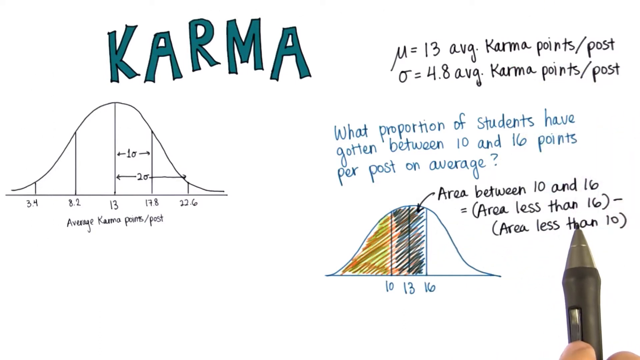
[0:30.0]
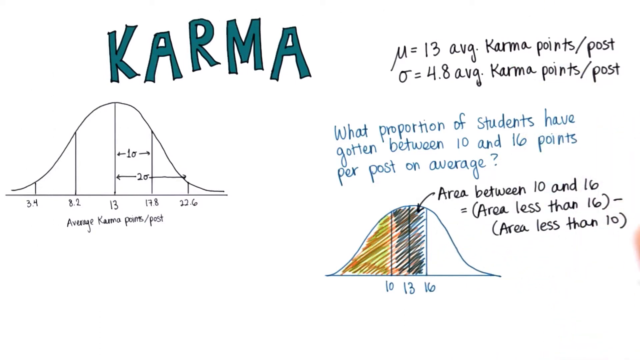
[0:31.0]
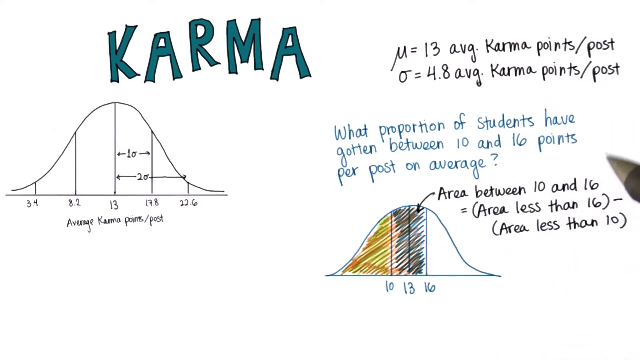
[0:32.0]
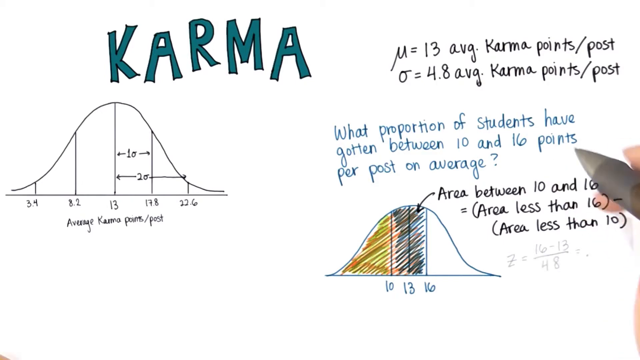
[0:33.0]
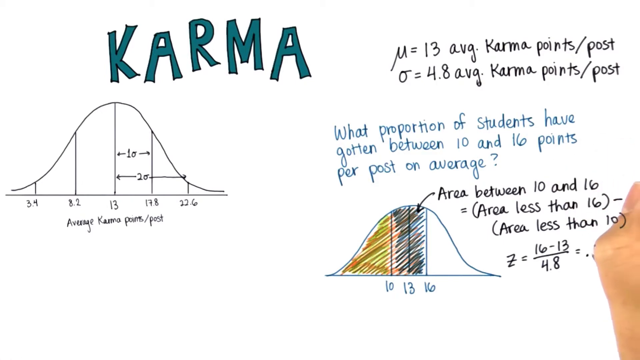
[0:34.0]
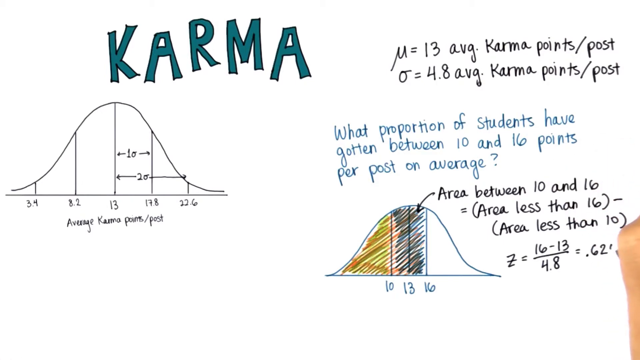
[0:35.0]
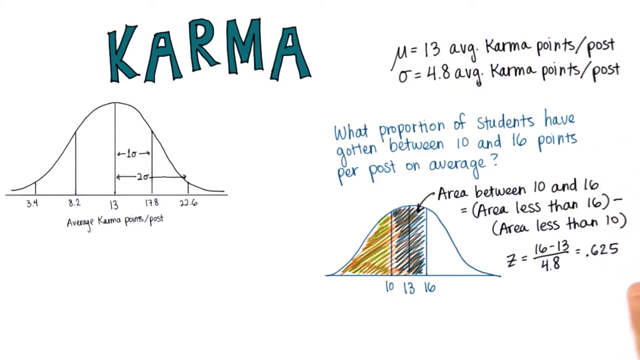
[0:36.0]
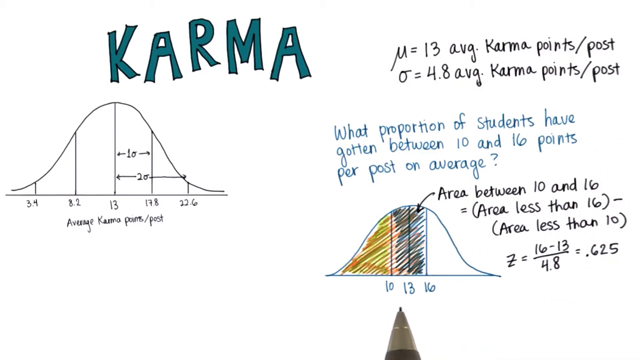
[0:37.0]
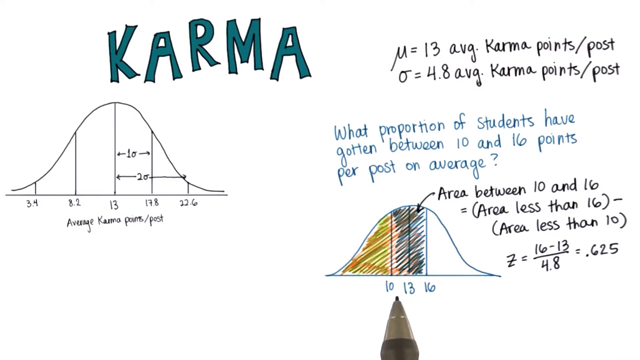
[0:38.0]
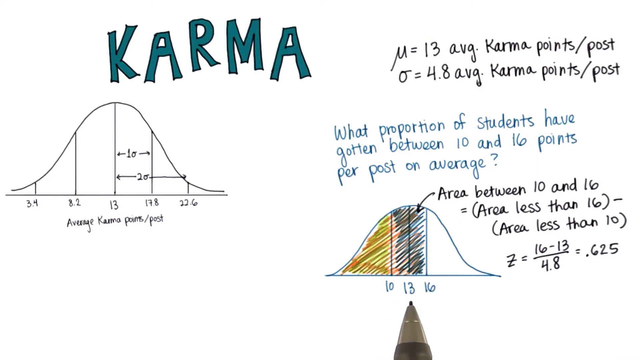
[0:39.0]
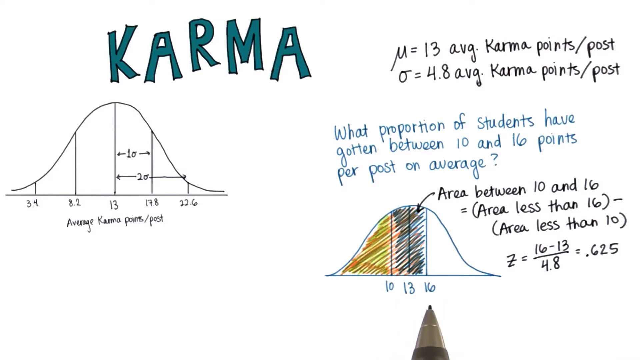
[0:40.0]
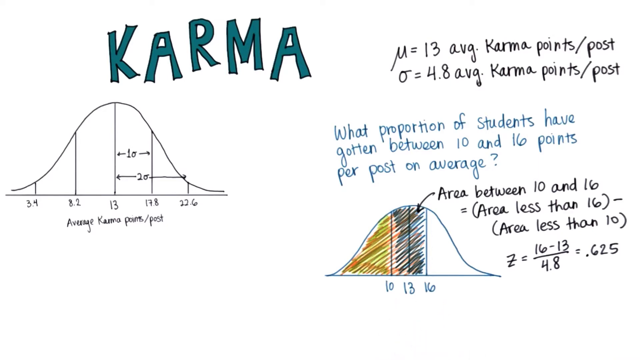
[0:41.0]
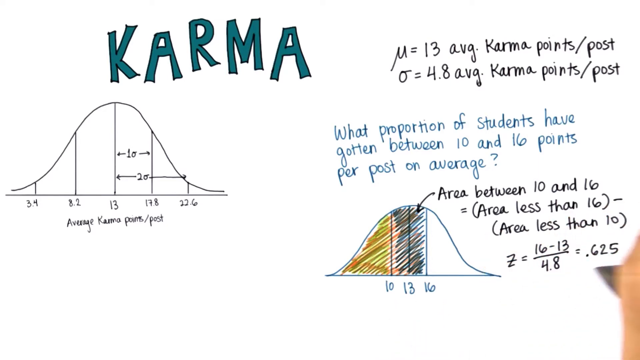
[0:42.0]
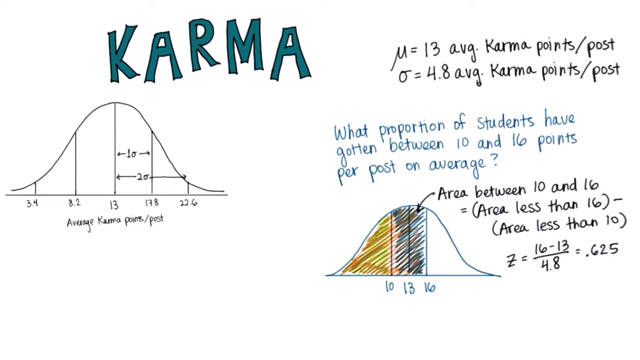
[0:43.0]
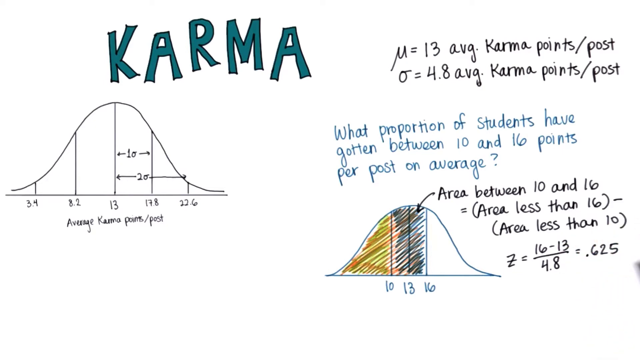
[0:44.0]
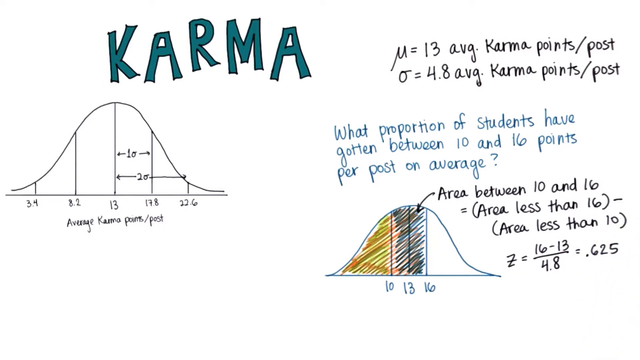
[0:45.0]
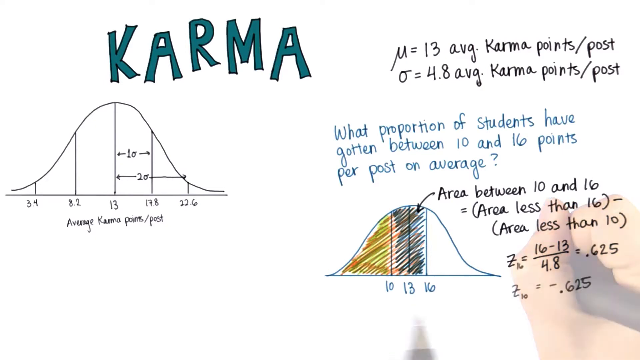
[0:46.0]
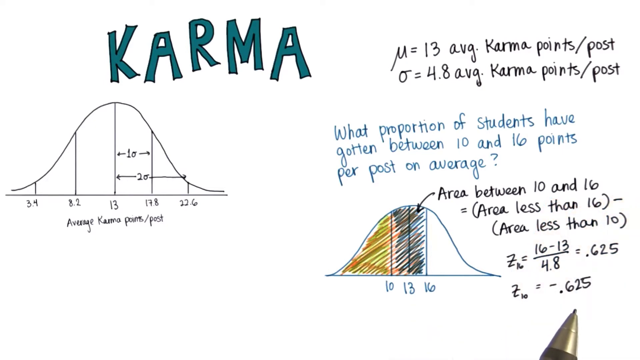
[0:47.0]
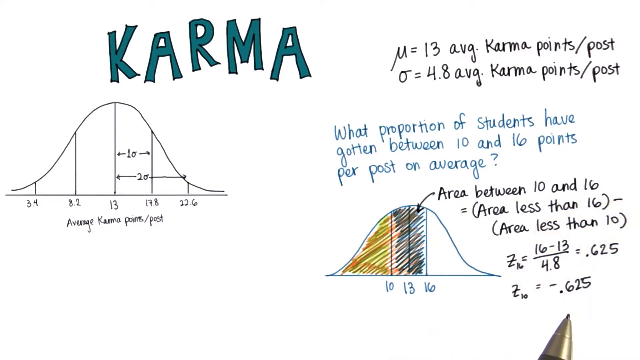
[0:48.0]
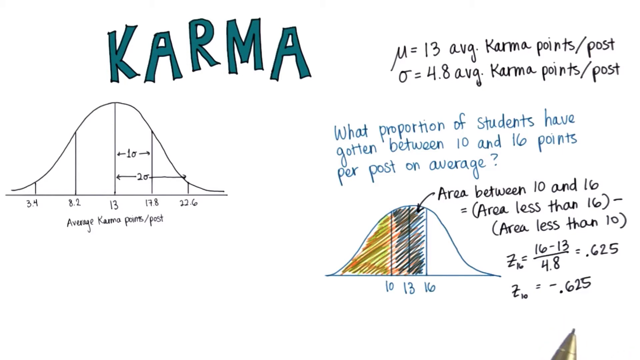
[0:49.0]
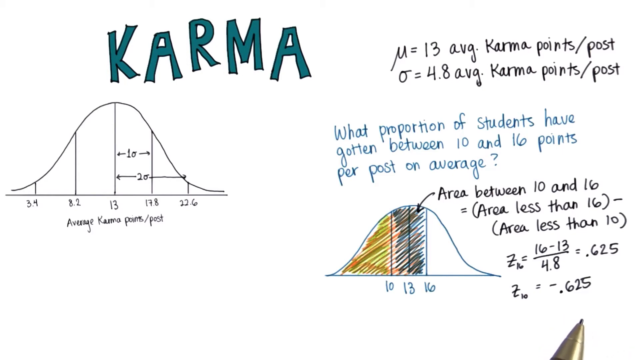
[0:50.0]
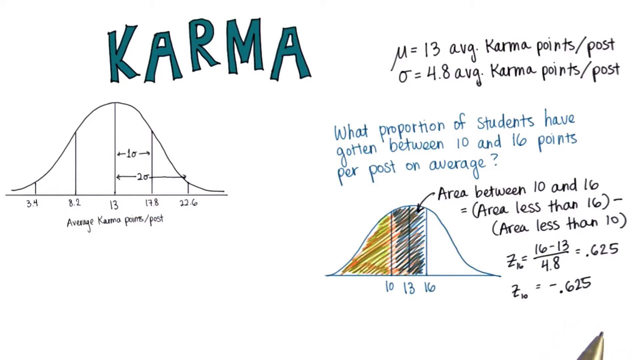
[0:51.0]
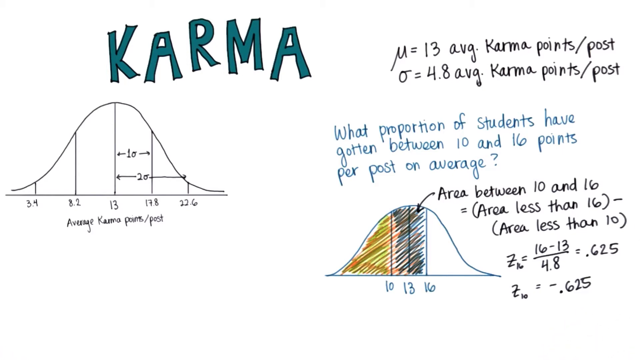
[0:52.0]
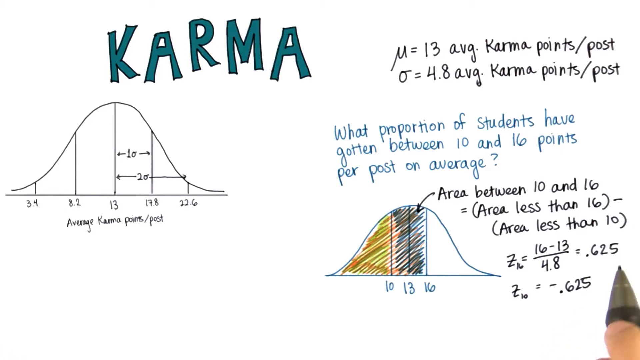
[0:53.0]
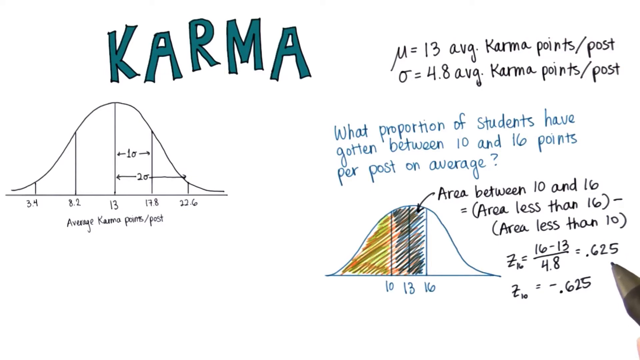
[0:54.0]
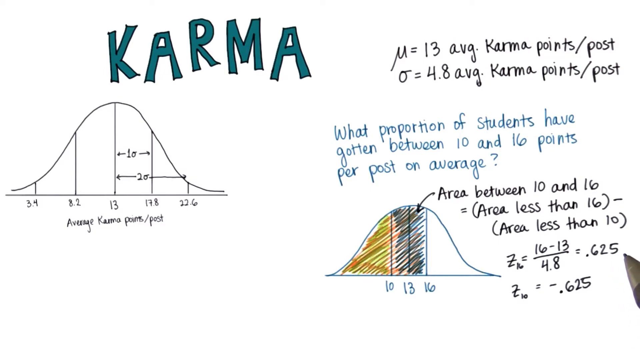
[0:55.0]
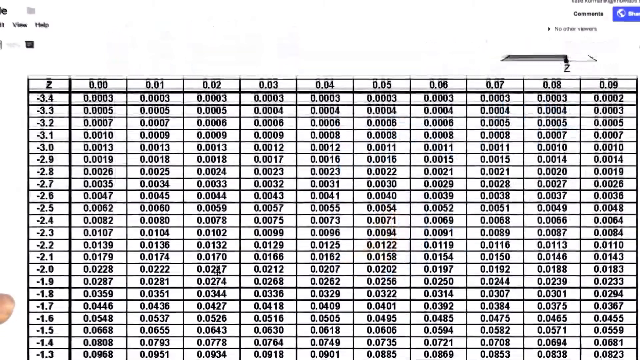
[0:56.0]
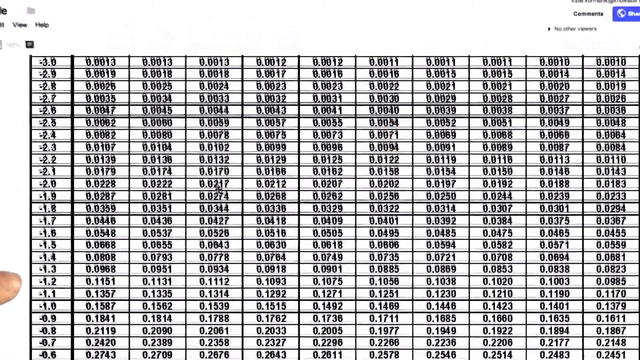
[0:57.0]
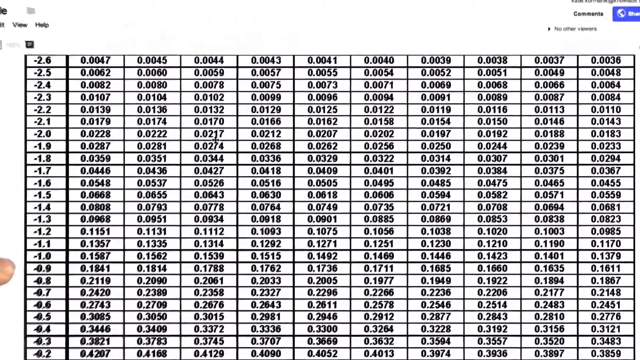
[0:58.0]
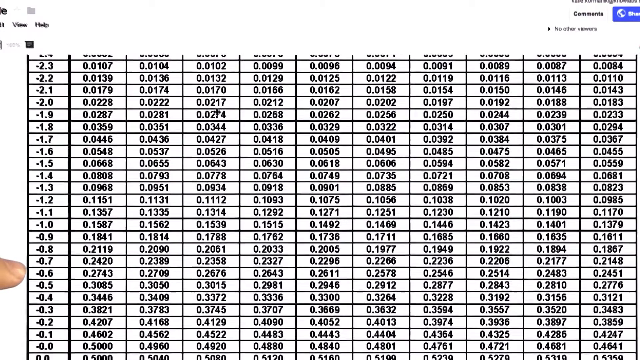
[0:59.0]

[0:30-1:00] On a white background, the large blocky word "karma" is written kind of crooked at the top, colored greenish blue. Equations to the side of it read "M equals 13 average karma points per post" and "O equals 4.8 average karma points per post". Handwriting under that on the right-hand side reads "what proportion of students have gotten better between 16 and 10 points per post on average". A small graph on the left reads "average karma points per post", and a colored-in diagram on the right reads "area between 10 and 16", "area less than 16" and "area less than 10", marked in parentheses. A pen comes in from the side of the screen in the author's hand and points at each area in turn, held fairly steady and moving only slightly from area to area. A mathematical equation is written at the bottom, and a large chart is involved in working out its numbers.